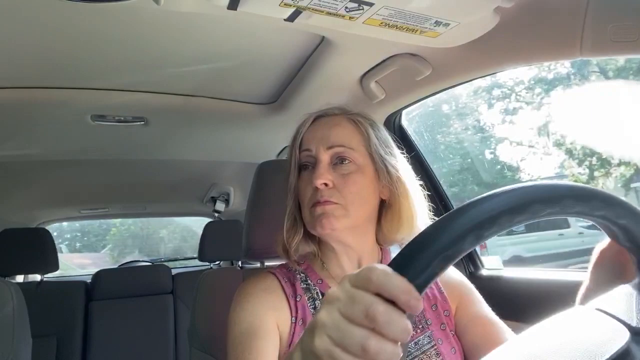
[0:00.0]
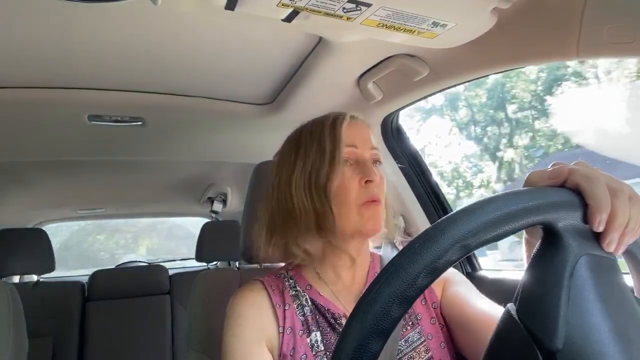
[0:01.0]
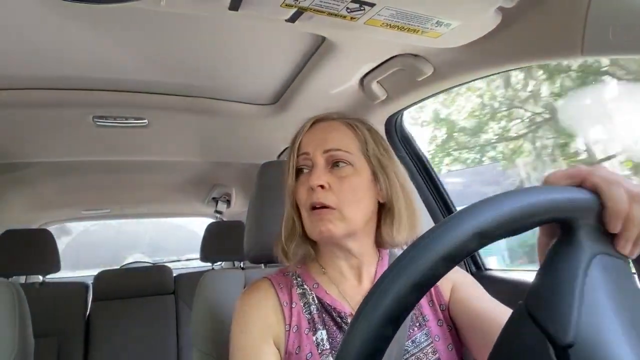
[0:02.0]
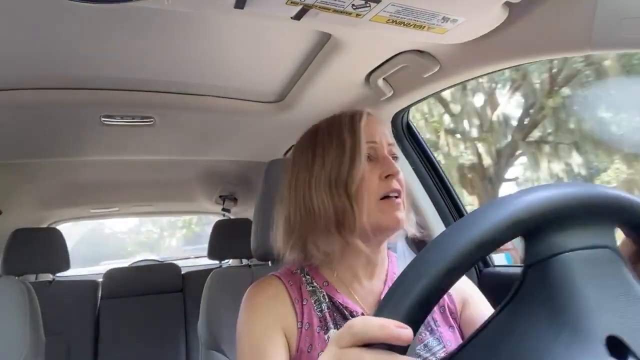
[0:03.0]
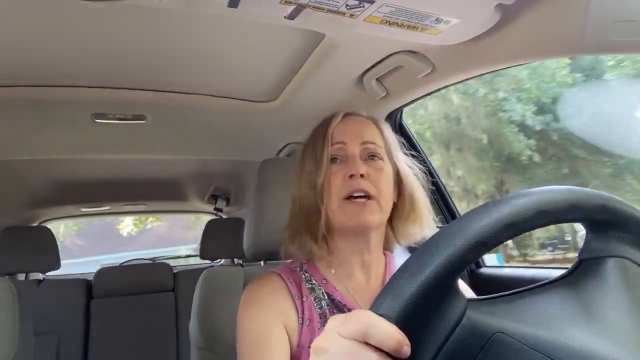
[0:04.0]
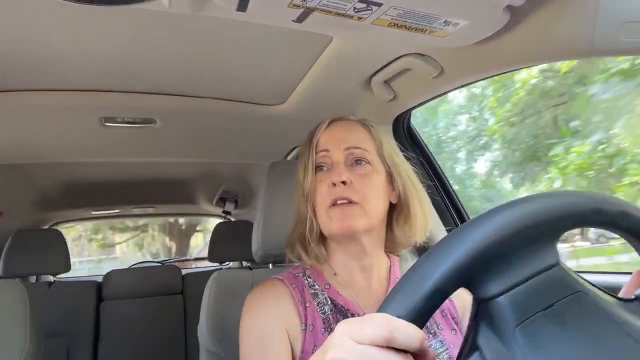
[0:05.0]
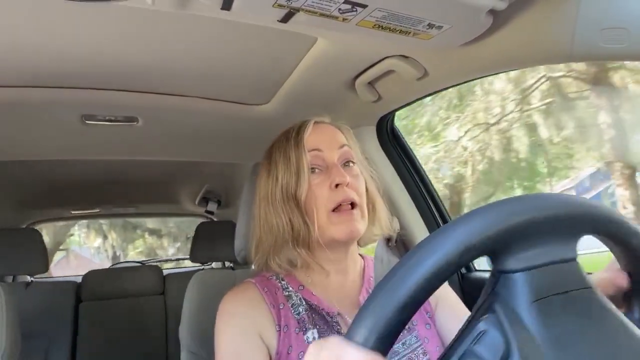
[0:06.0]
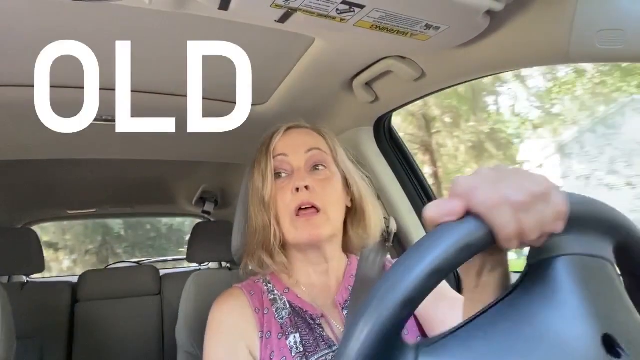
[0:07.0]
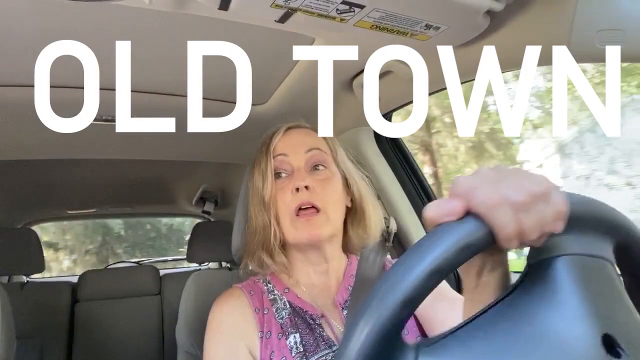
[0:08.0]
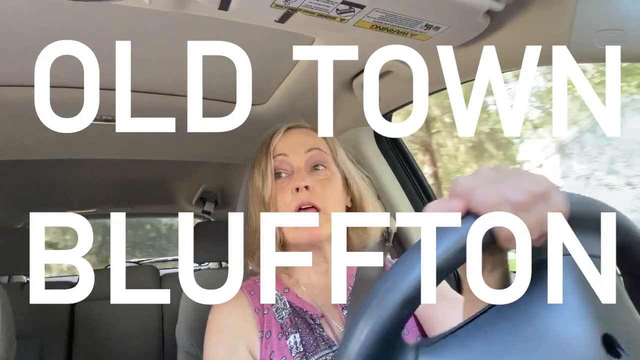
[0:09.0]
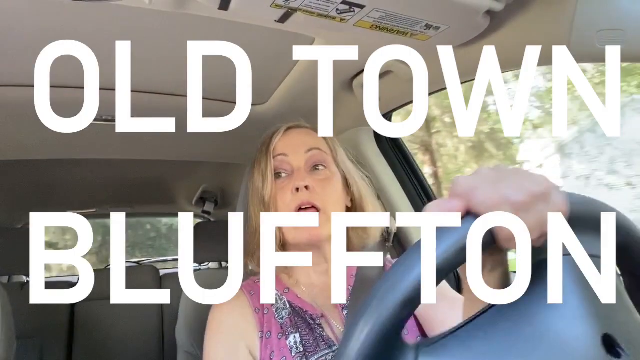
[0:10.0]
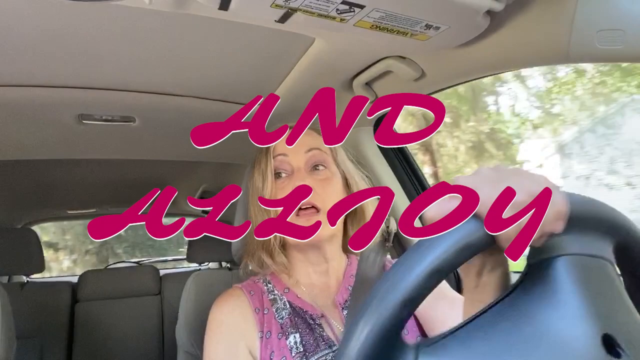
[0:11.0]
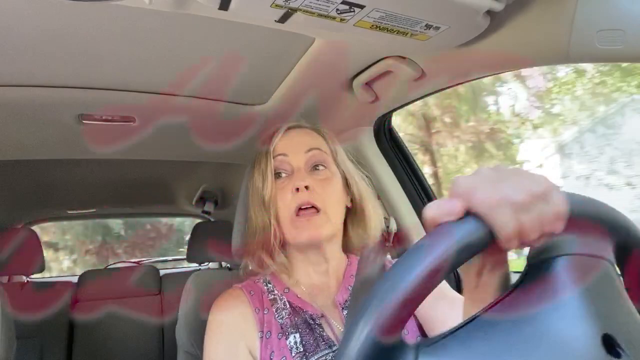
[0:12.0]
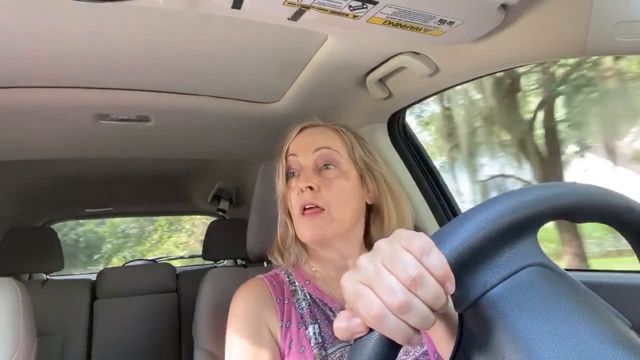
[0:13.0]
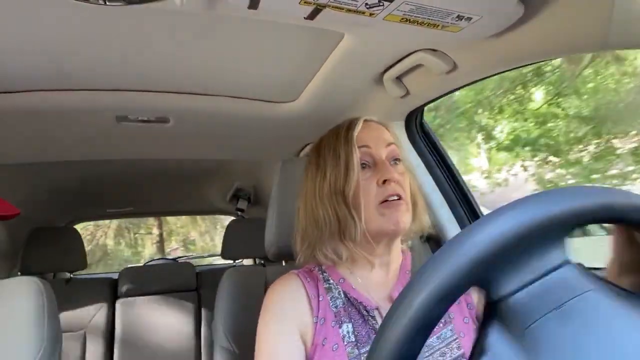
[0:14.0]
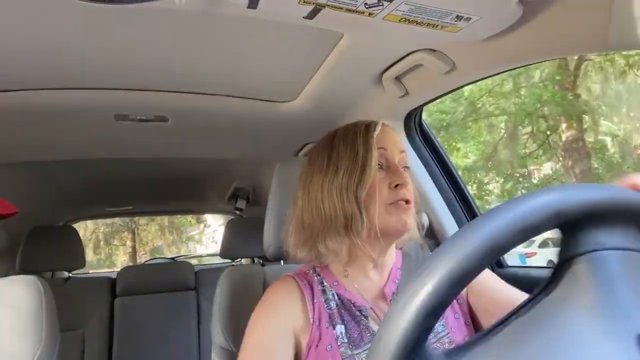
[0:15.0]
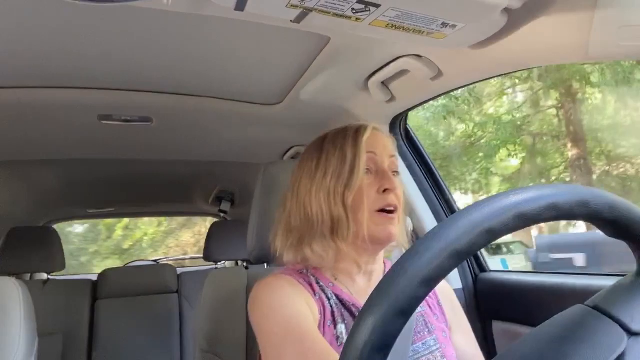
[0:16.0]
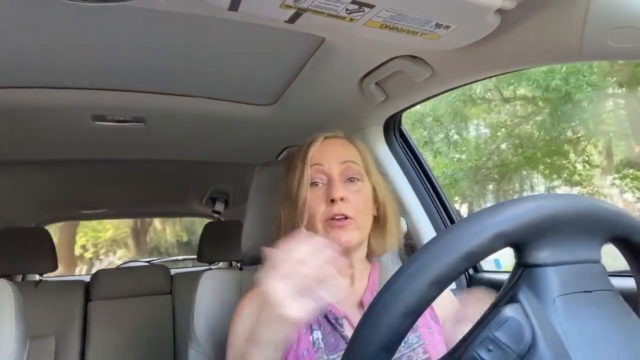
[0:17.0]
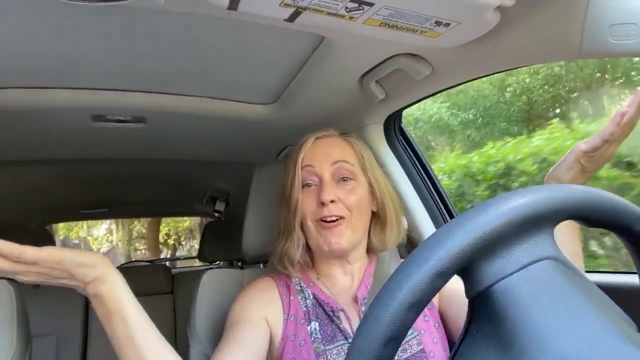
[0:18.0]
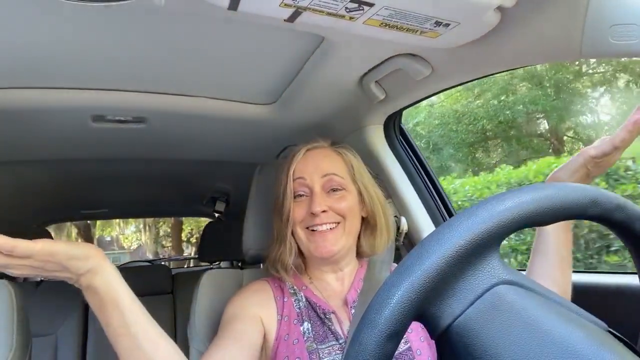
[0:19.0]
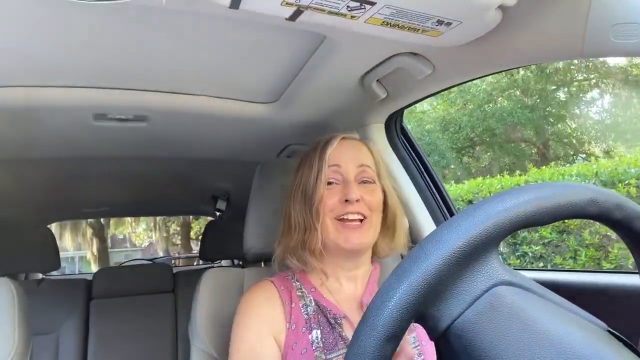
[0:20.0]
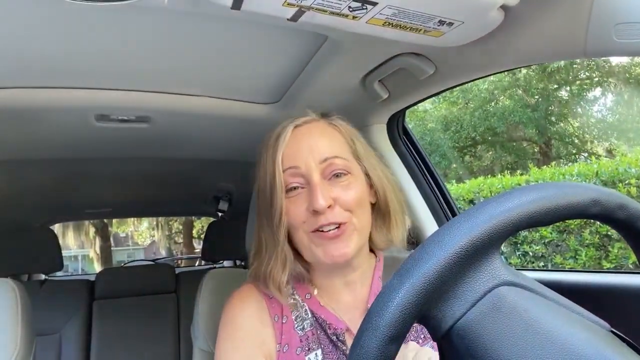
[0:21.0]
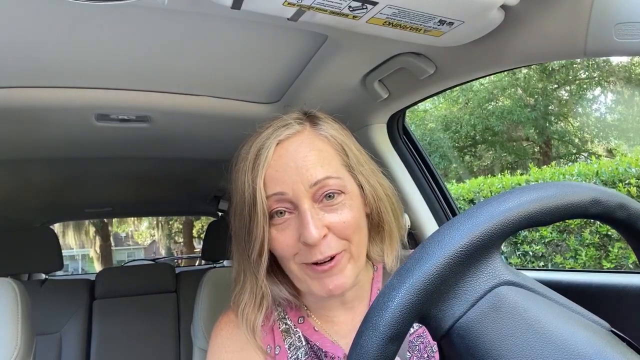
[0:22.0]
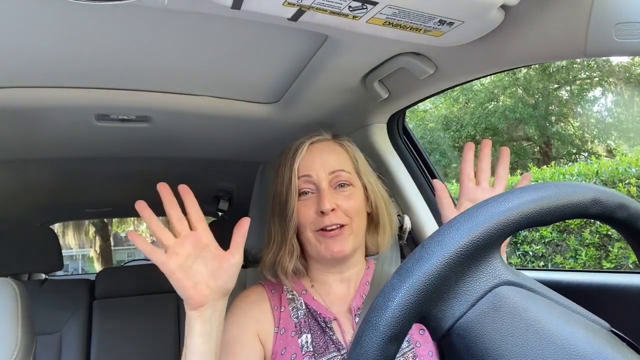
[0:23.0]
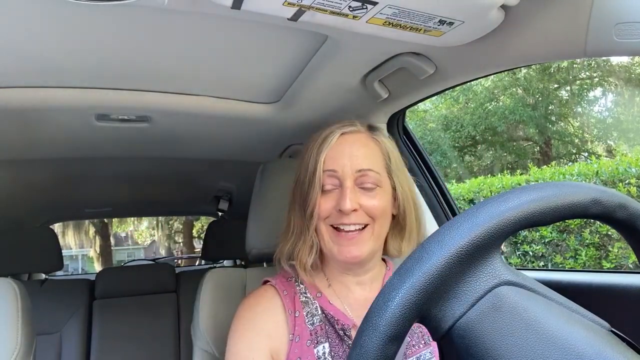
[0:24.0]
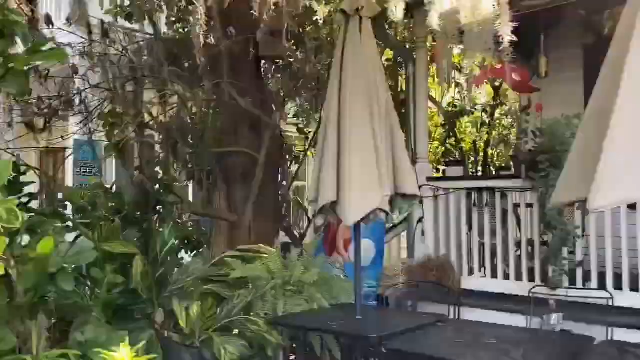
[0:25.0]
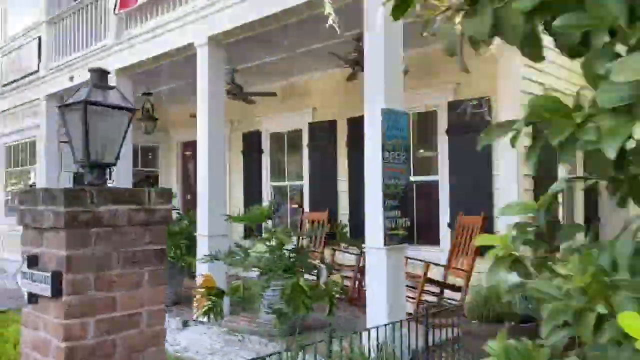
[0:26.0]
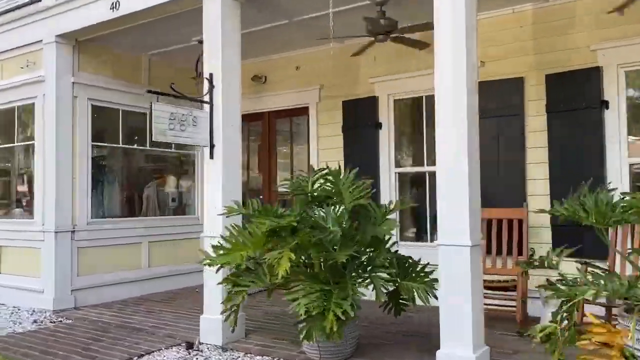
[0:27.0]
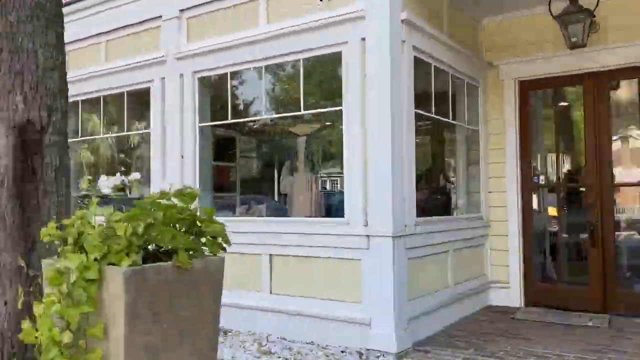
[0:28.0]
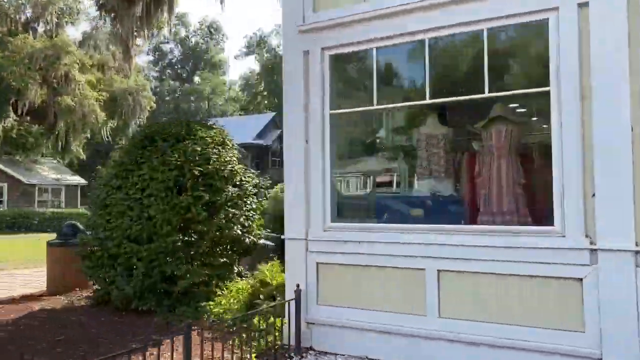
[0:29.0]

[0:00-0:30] Inside a car, a woman is at the wheel, driving with her hands on the steering wheel. At first she is looking to her right, then she looks to her left out the driver's side window, then back to the right again, moving her head left and right while turning the steering wheel. After a few seconds, very large white lettering comes onto the screen, taking up the whole screen, reading "Old Town Bluffton." A different font follows, a different style and not the same color, kind of magenta, which appears to read "and Allison." The woman continues to turn her head and turn the wheel. She looks like she is talking, apparently into the camera, which is on the dashboard, some kind of dash cam.